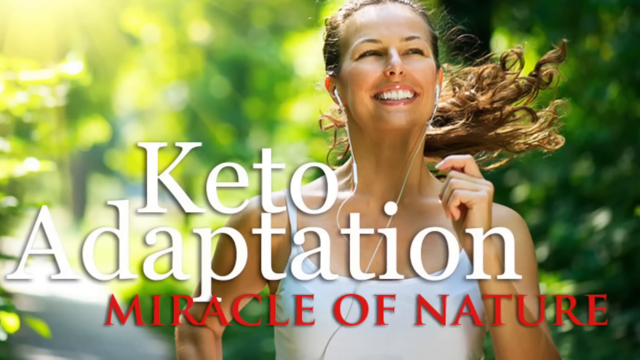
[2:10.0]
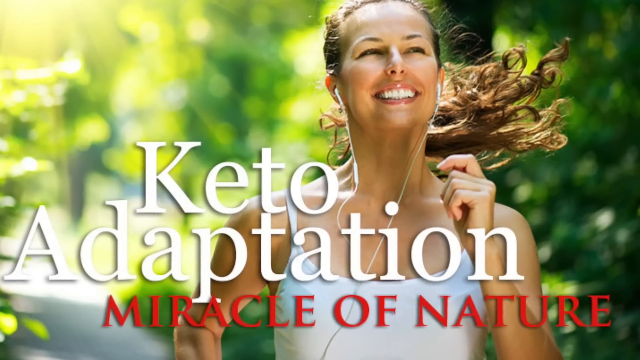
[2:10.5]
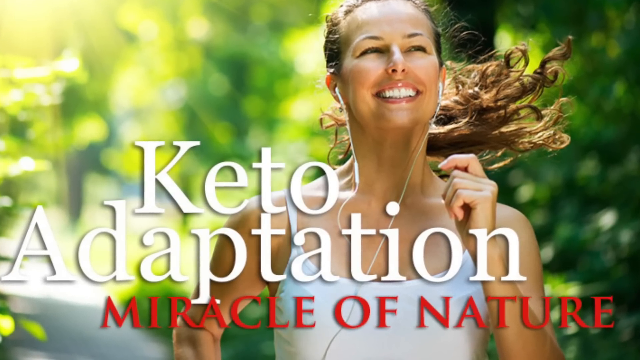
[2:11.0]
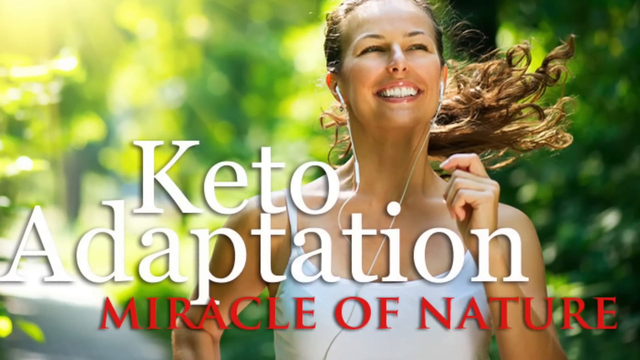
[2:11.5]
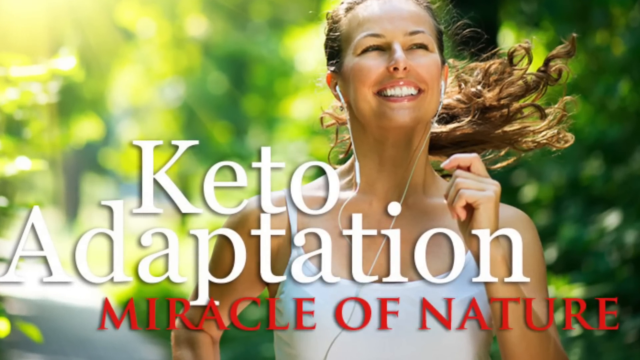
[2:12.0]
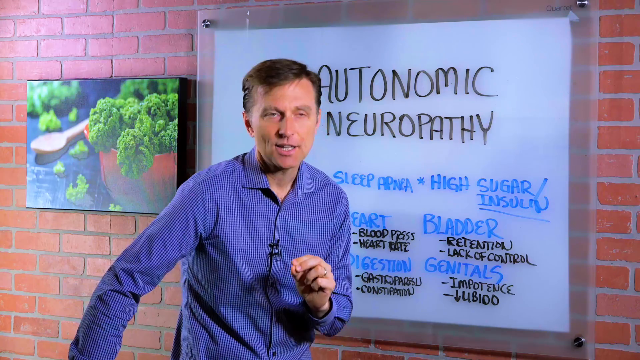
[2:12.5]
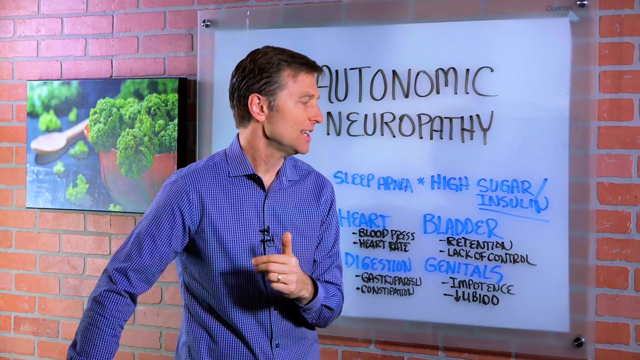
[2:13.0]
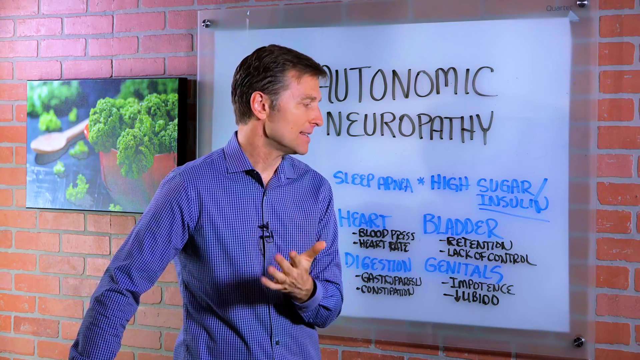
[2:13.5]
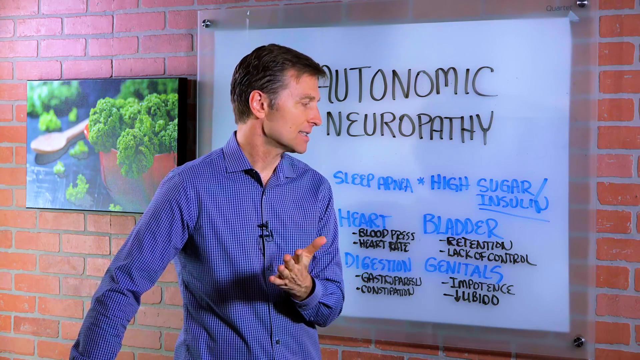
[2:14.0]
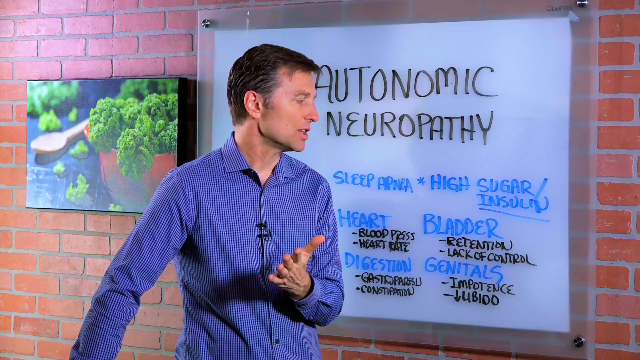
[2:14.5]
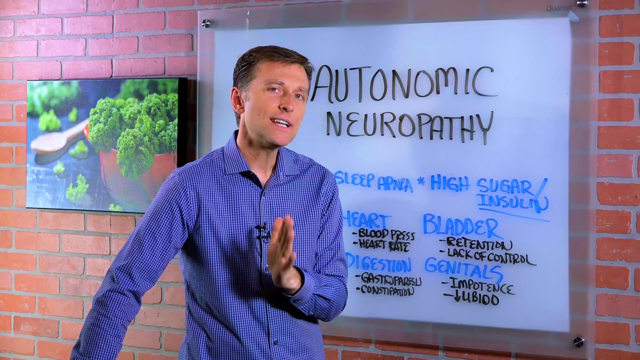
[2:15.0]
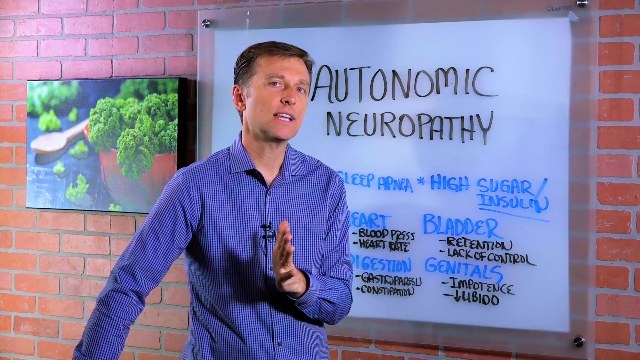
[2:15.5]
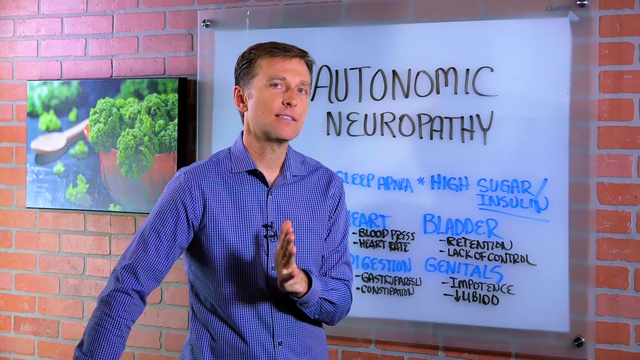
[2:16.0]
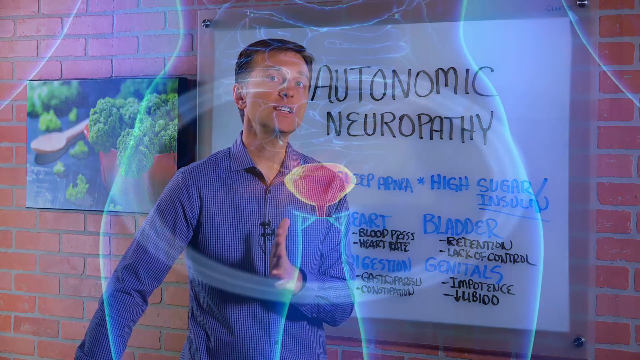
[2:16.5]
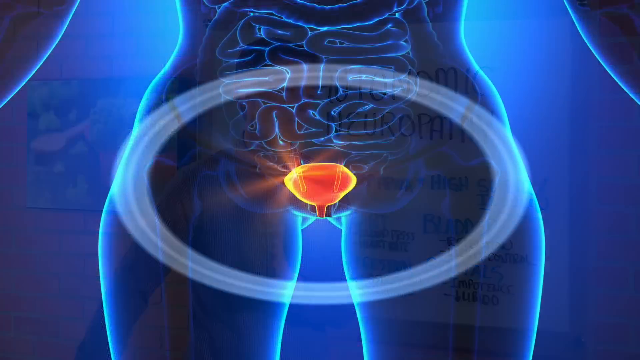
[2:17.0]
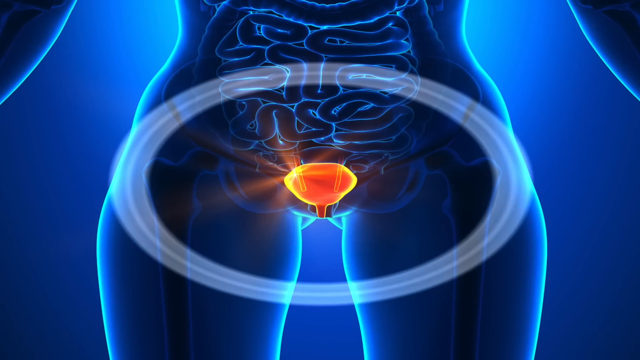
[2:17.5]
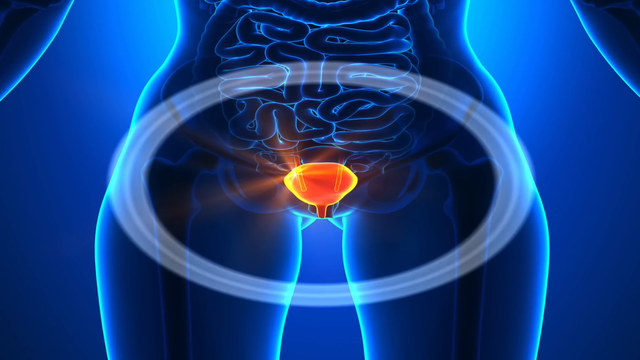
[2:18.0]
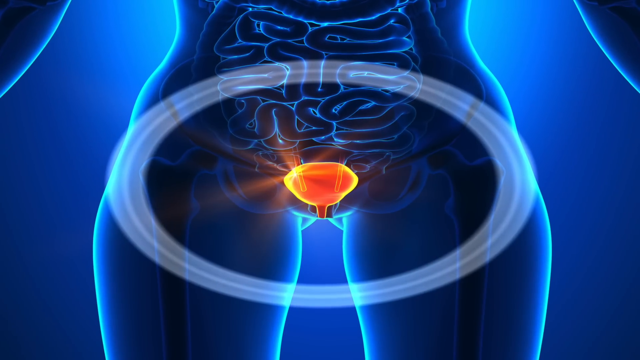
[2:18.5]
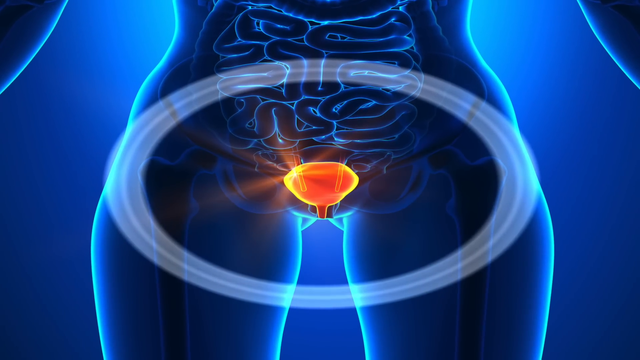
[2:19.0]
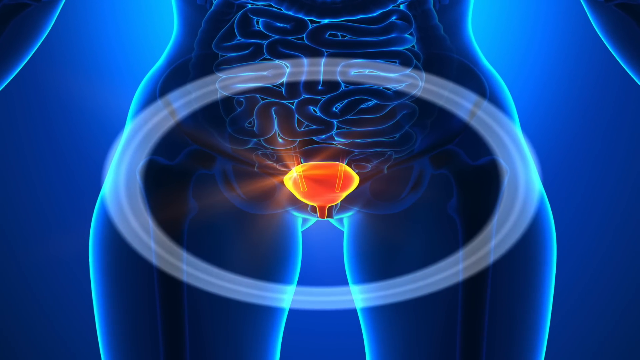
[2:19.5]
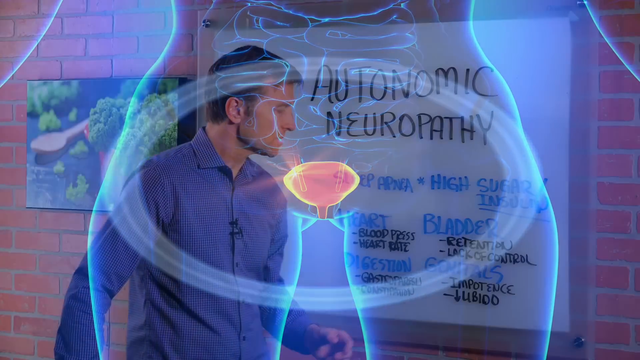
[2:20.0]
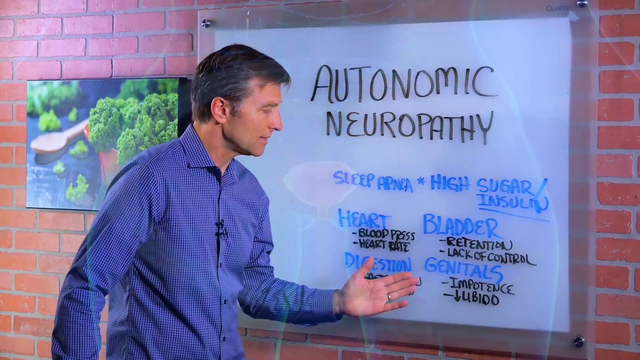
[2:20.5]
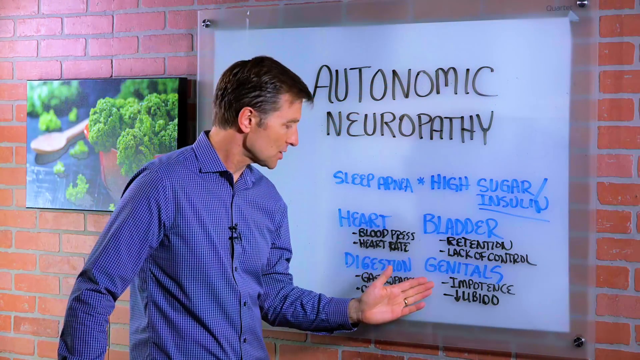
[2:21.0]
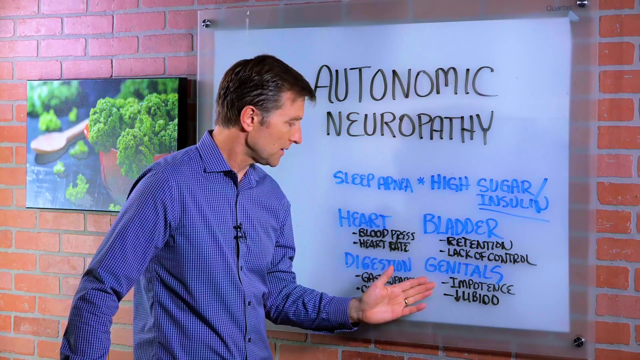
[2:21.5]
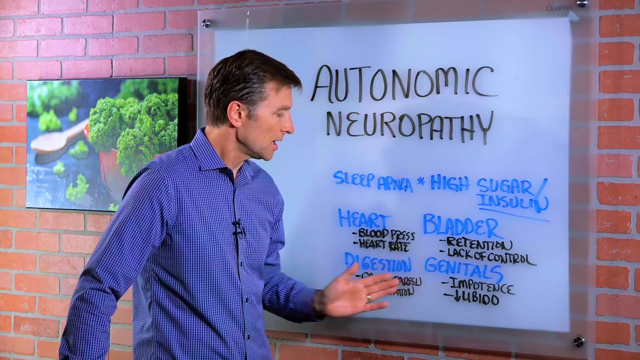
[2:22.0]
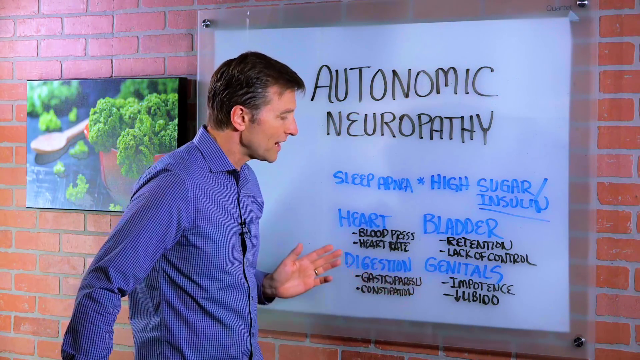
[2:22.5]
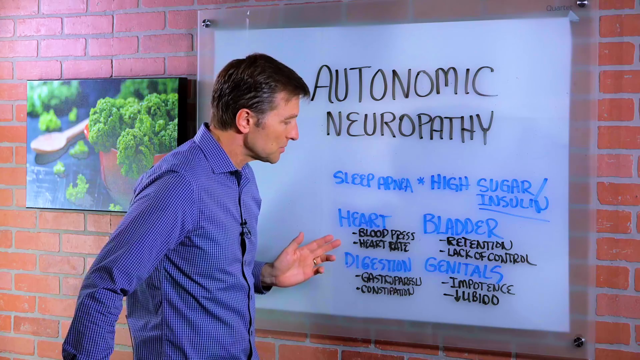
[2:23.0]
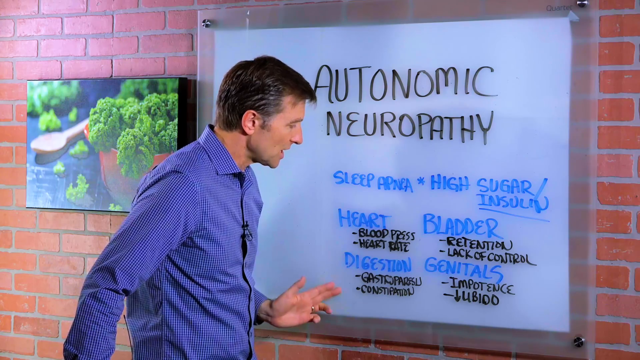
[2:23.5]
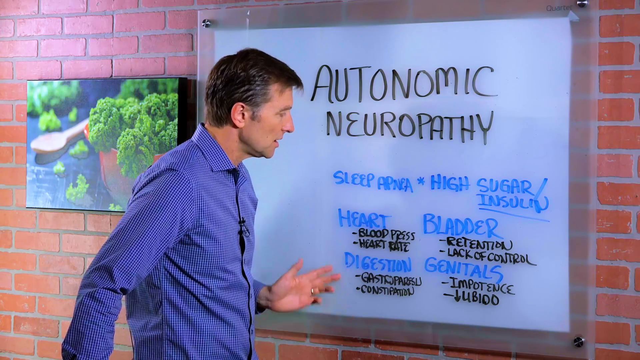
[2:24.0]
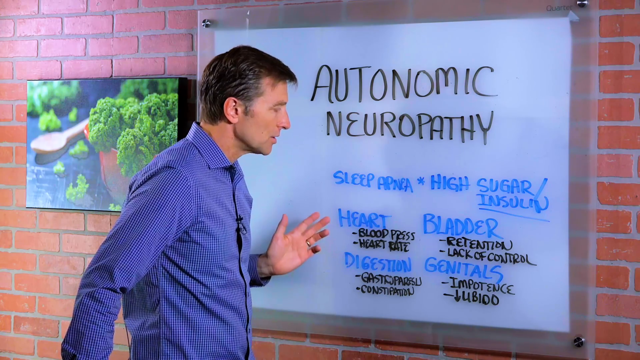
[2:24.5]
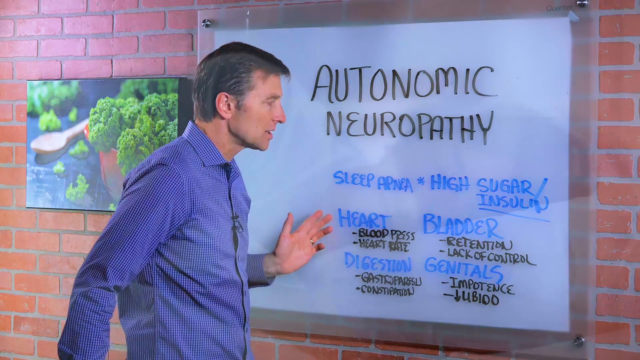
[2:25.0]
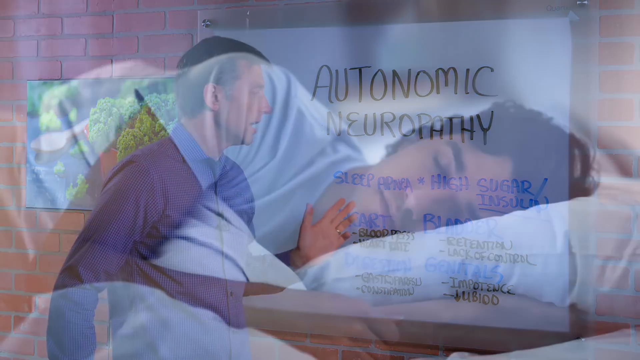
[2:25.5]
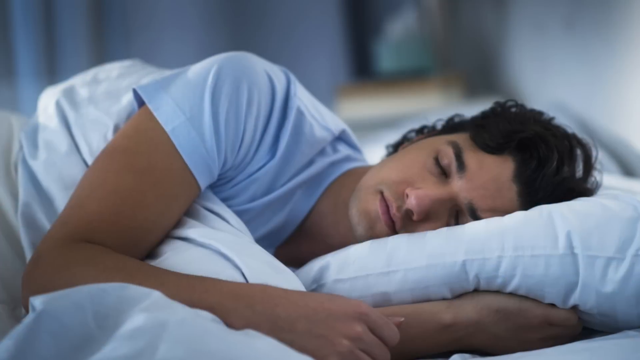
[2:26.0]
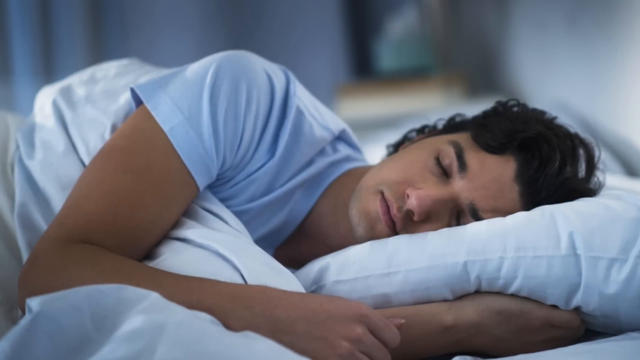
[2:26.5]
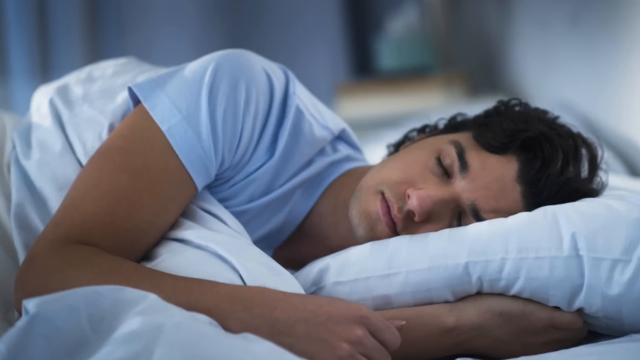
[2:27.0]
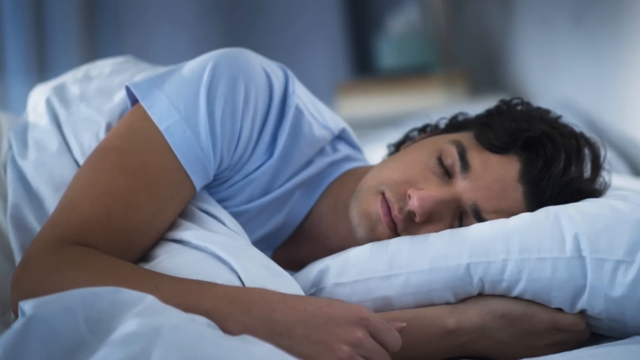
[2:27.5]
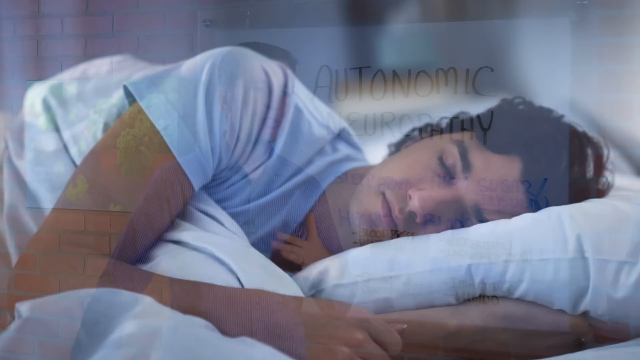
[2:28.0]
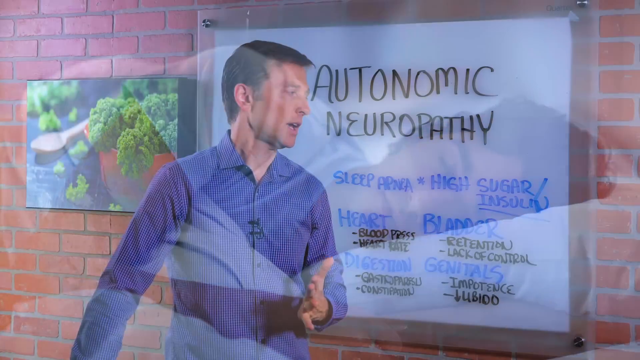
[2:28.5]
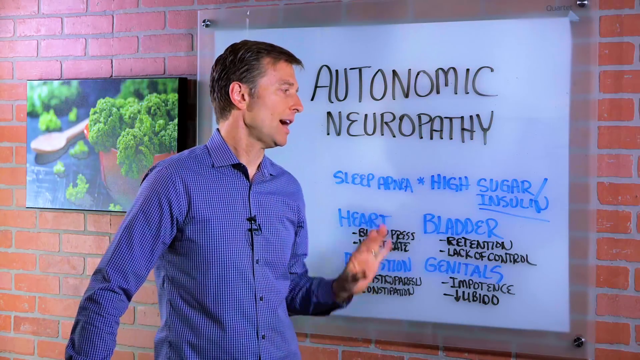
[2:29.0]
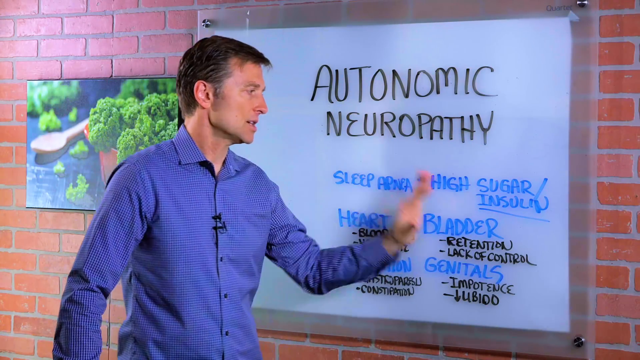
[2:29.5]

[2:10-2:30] A woman appears to be either jogging or speed walking through what seems to be a park, with lots of green mature trees in the background. It looks like a warm, sunny day, possibly in spring or summer. The sun on the trees on the left side makes them appear more yellow and makes that area look overexposed. The woman is smiling with her head tilted up slightly. She has earbuds in her ears, with a white cord hanging down from them. Her left arm is bent at the elbow, her hand pivoted to the right and her fingers tucked in toward her palm. She wears a gray tank top, and her right arm is down toward her body. The words "keto adaption miracle of nature" are written across the screen. Next, an image shows a pelvis area that appears to be a woman's, with the waist tapered in and the hips spread a bit wider. The intestines are visible, along with the upper thigh bones in the left and right thighs.